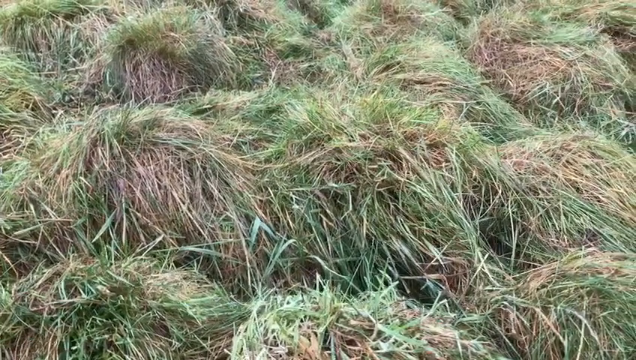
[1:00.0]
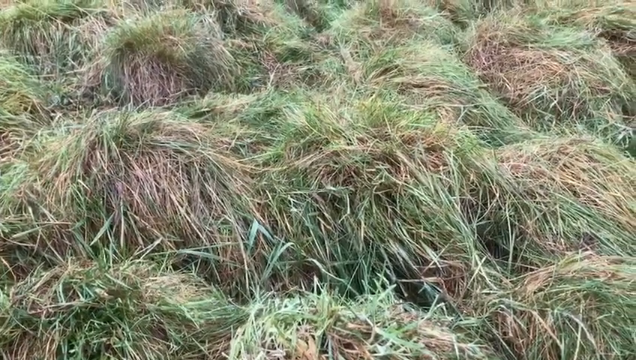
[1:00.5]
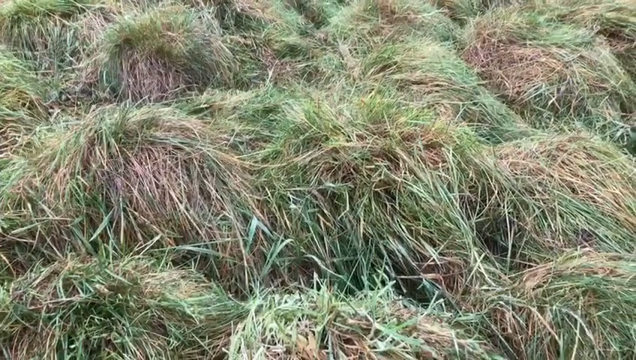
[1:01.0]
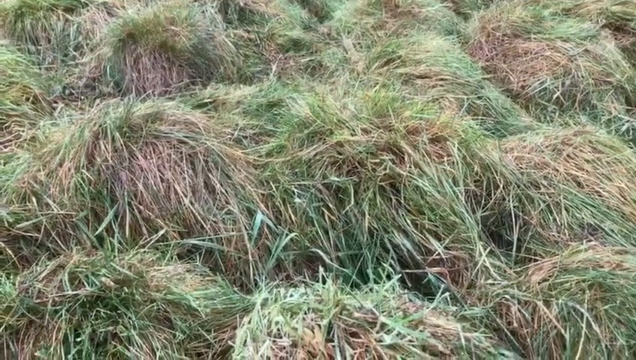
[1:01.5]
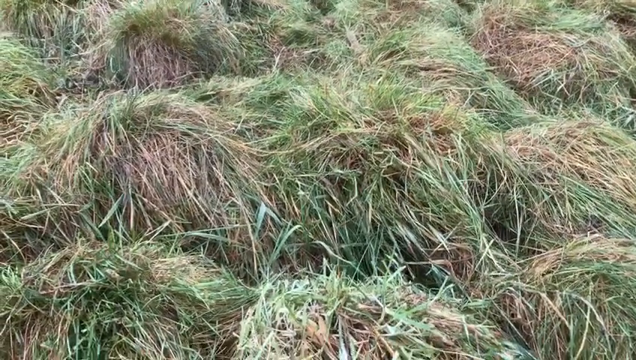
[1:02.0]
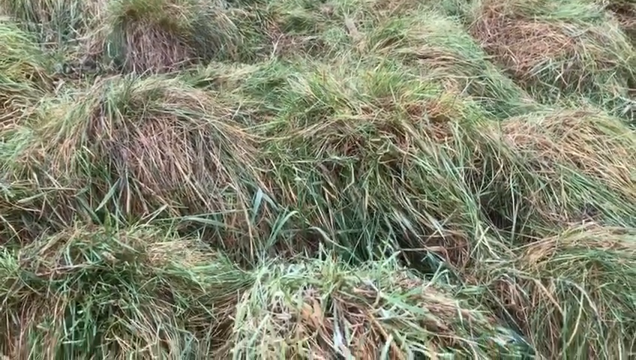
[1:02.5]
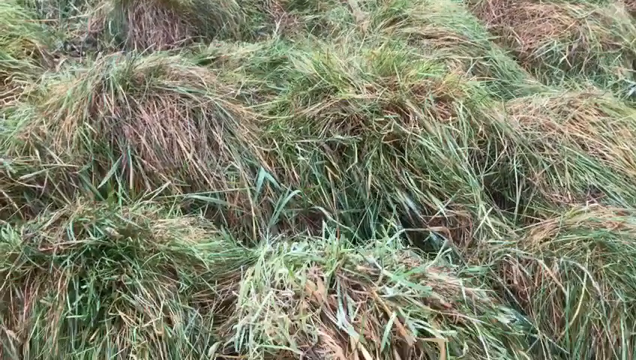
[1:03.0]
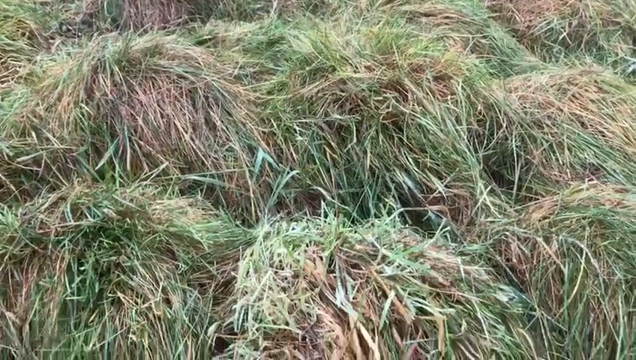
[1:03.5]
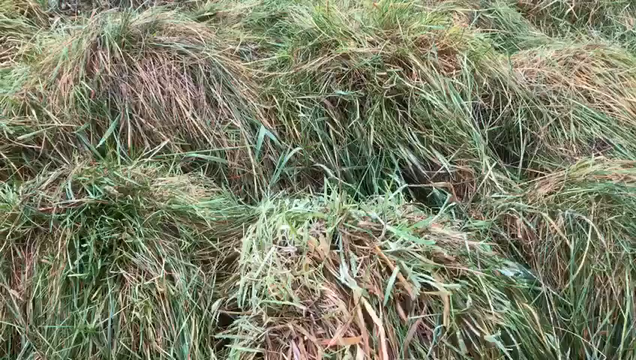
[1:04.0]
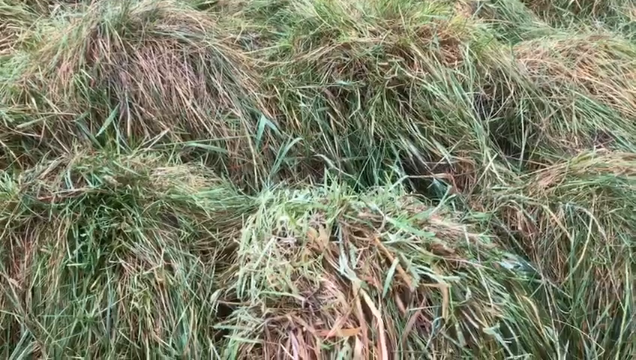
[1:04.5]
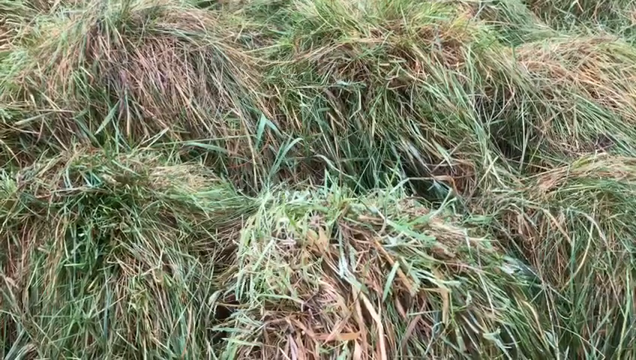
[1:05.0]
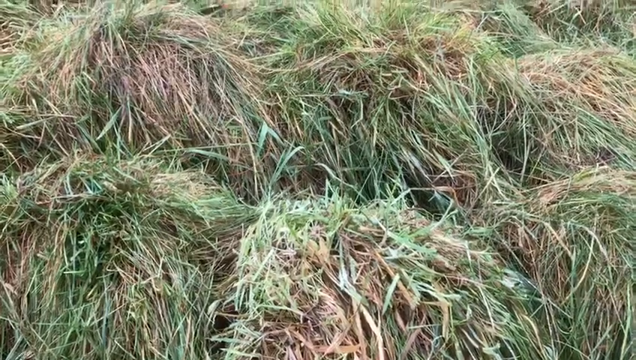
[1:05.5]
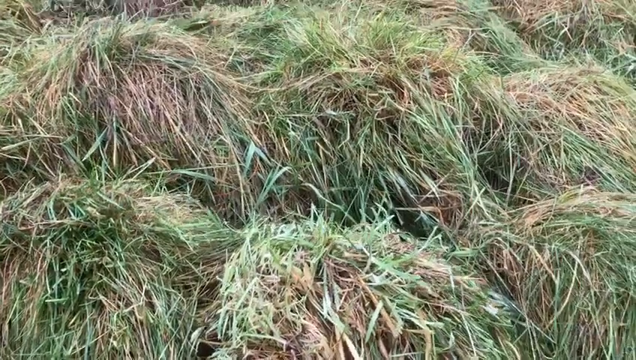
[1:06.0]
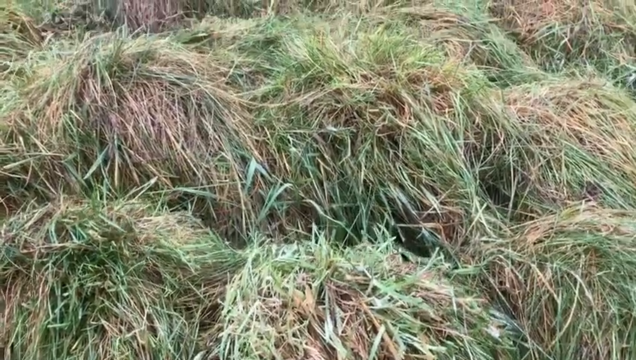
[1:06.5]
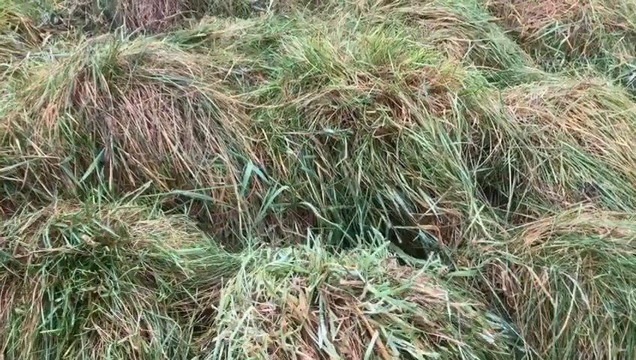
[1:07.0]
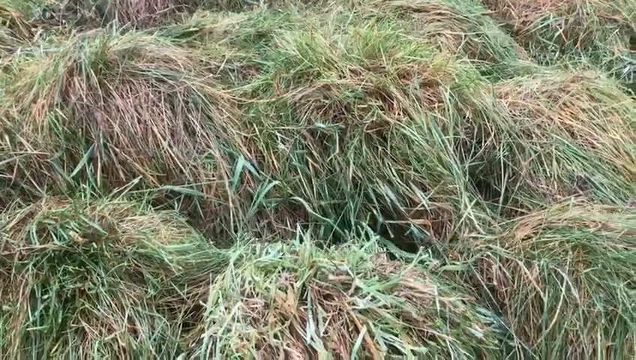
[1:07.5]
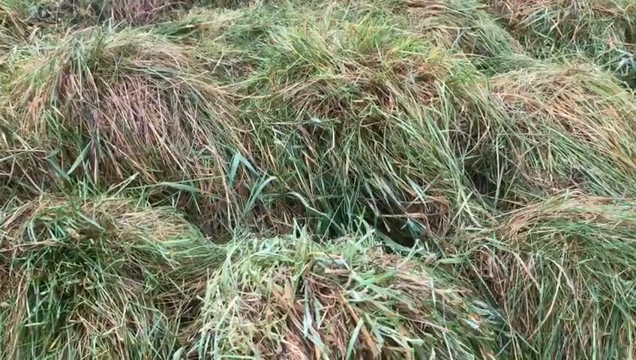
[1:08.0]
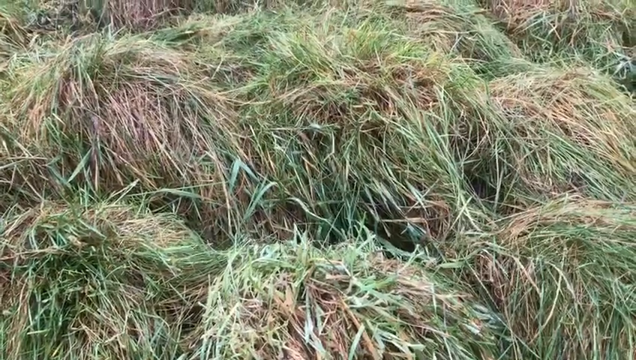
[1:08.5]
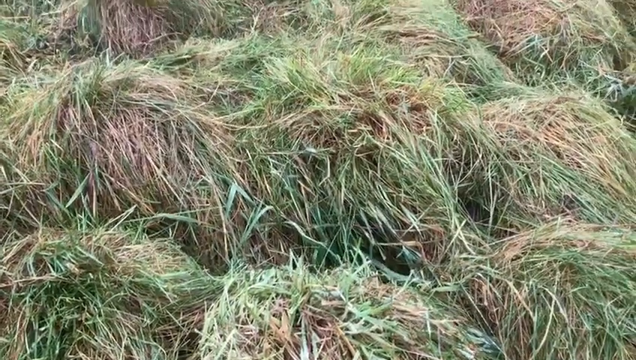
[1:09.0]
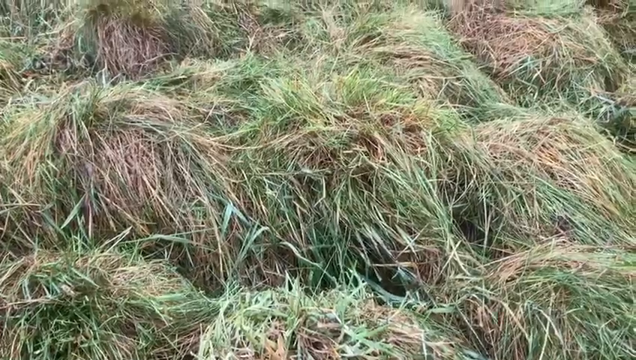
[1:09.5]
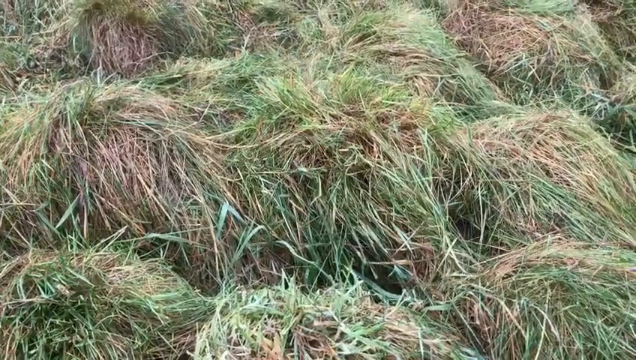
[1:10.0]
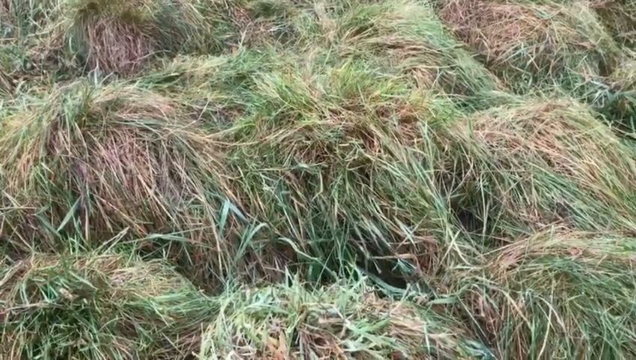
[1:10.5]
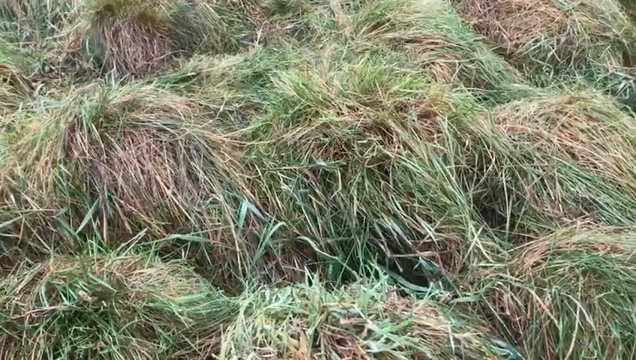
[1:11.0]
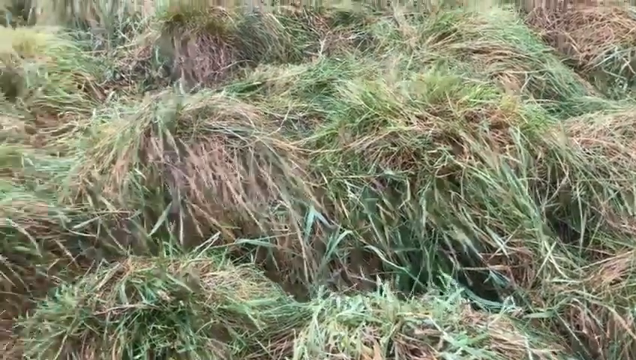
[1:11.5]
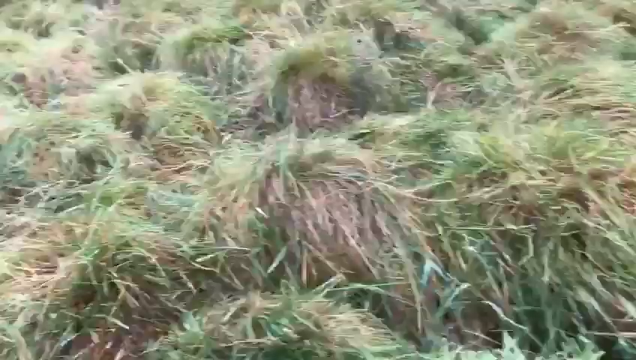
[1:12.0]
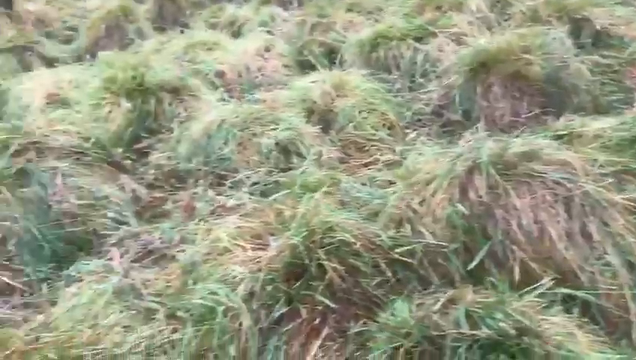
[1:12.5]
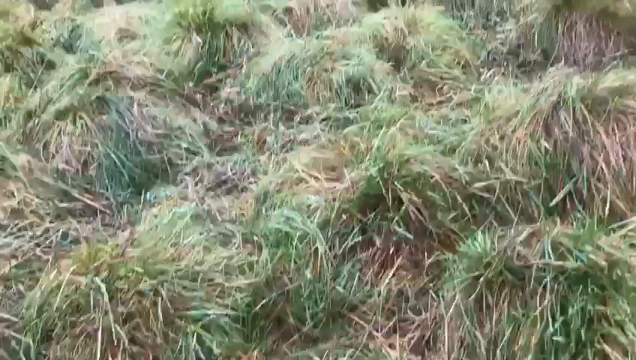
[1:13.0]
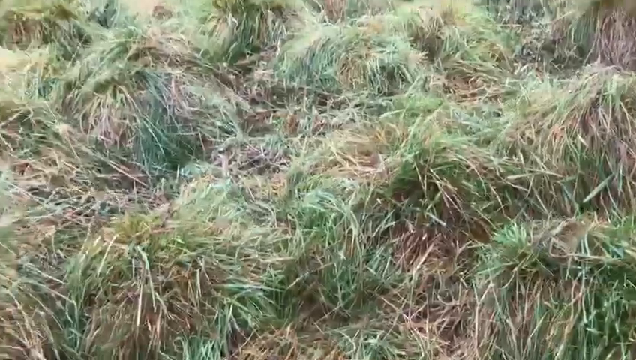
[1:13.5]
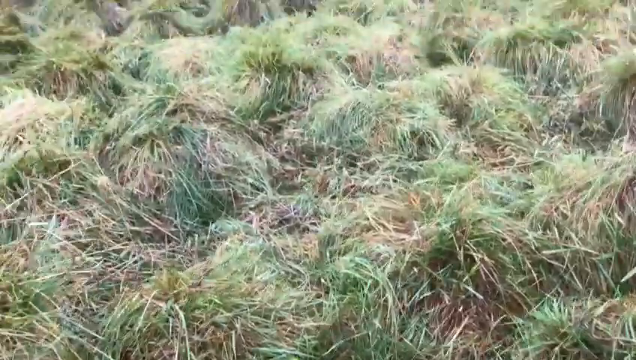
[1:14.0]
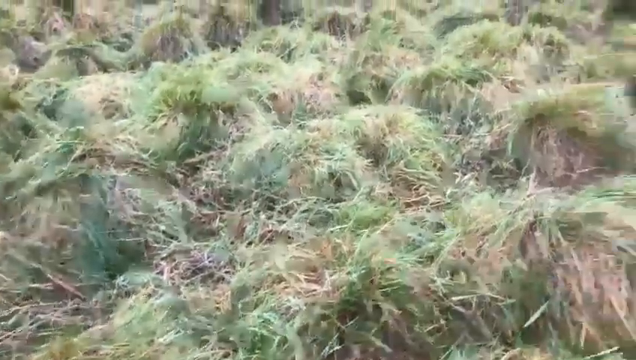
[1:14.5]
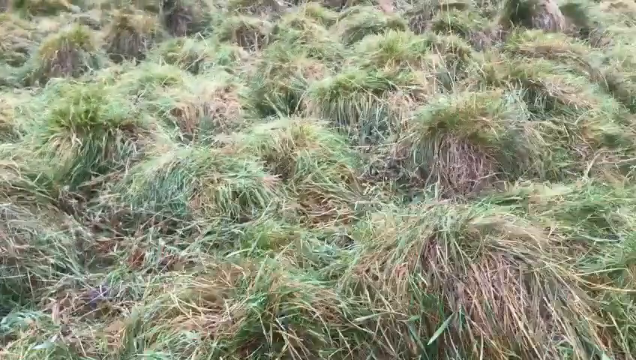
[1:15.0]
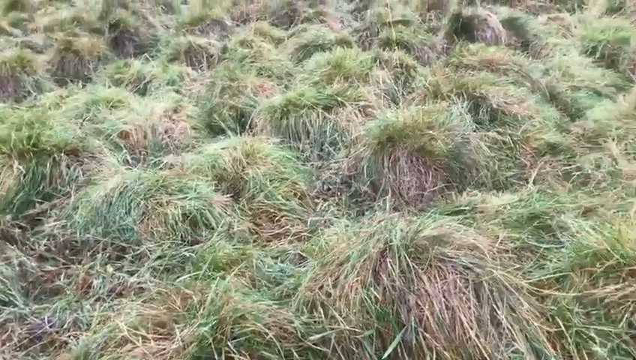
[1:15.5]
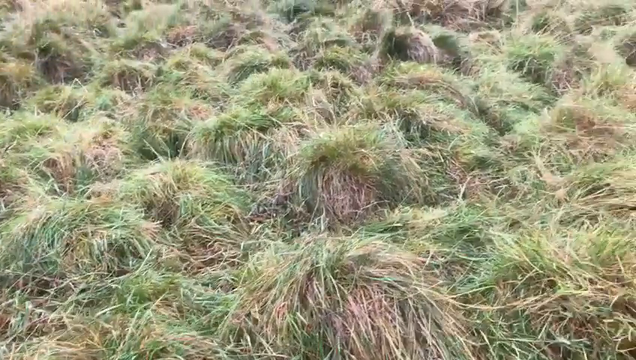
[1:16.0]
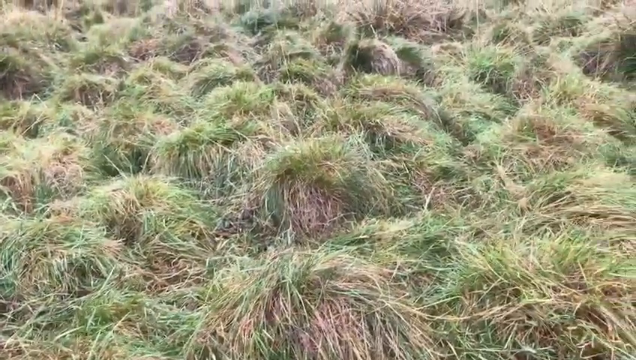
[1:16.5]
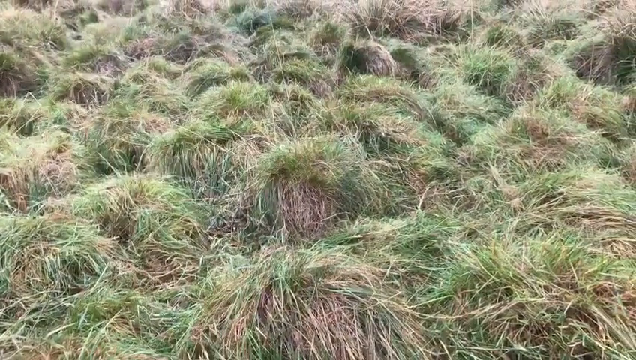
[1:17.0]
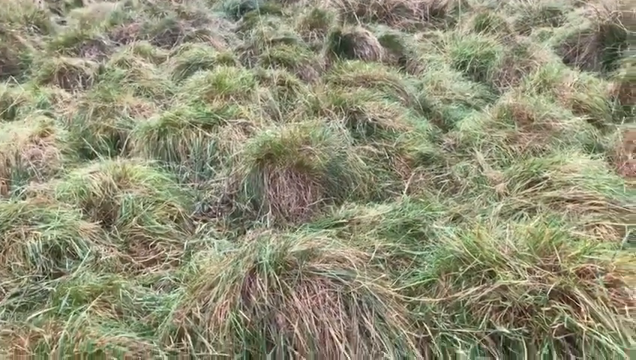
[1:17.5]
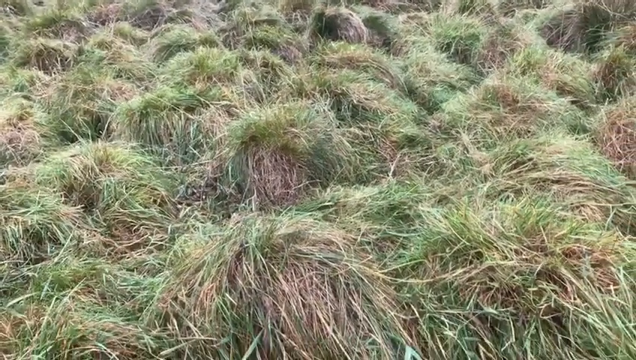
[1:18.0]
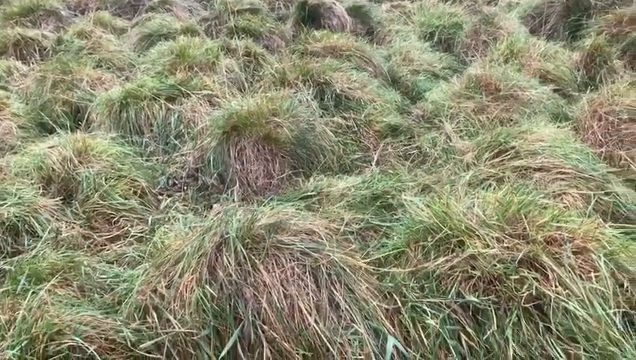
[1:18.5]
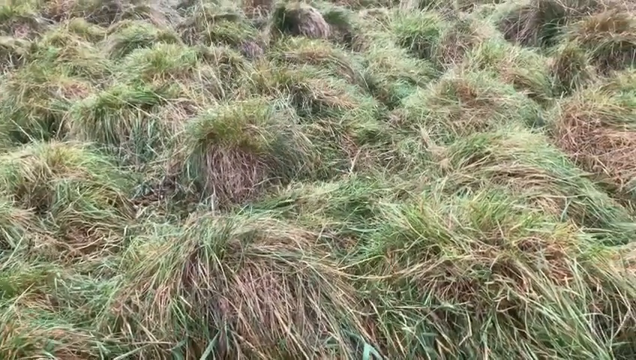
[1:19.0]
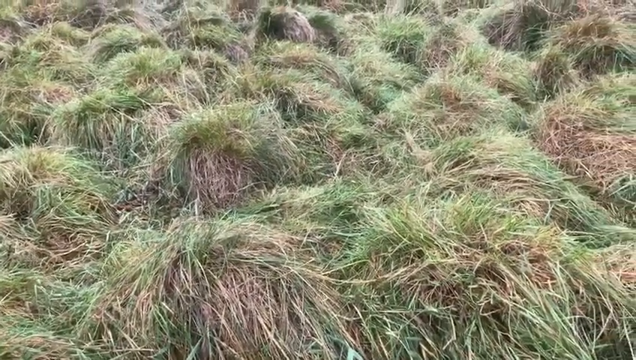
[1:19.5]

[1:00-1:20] A close-up shows thick pasture grass, long and in tufts, its color varying from older tan and beige growth intermixed with newer green growth on the hillside. The camera moves slowly upward and to the right in a close-up view of the ground, then swings left, showing thick grass that appears to be in tufts. As the camera pans, the tufts look quite thick, with a slight variation in color from more neutral tones to fresh green tufts showing through. The camera stays fairly close to ground level.